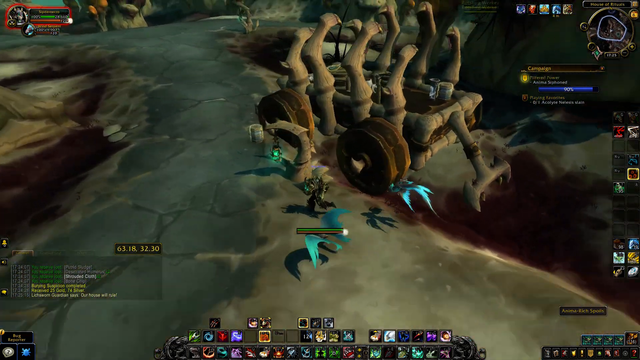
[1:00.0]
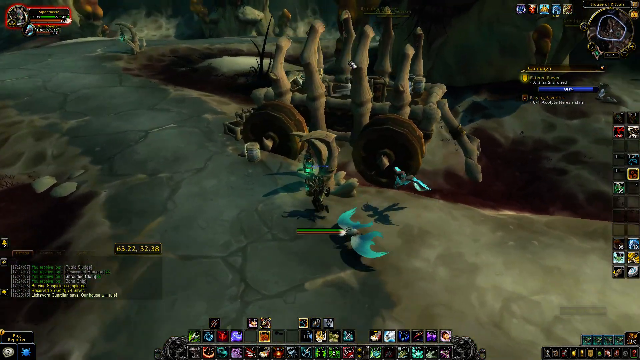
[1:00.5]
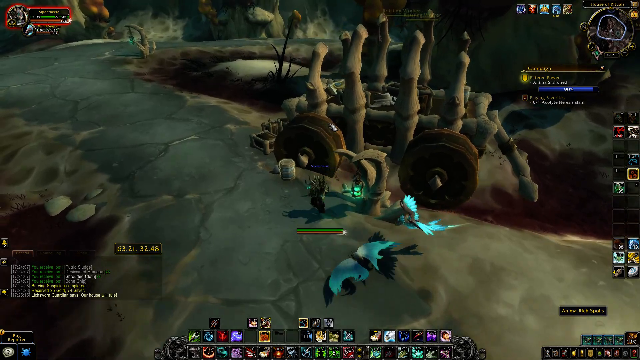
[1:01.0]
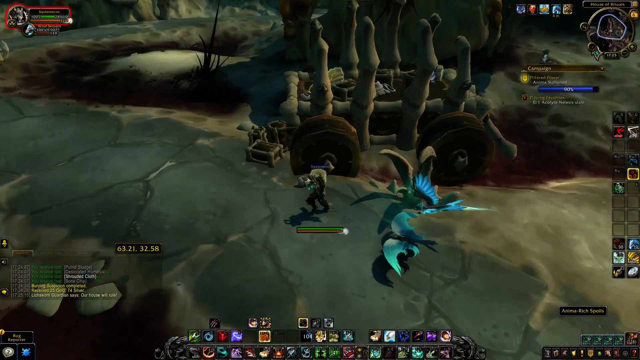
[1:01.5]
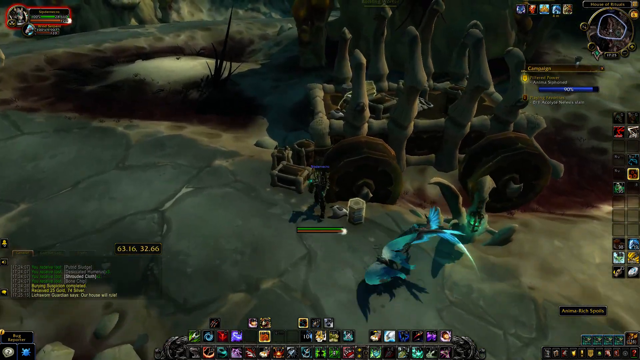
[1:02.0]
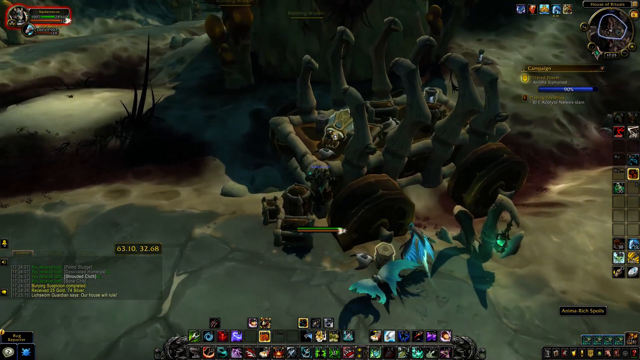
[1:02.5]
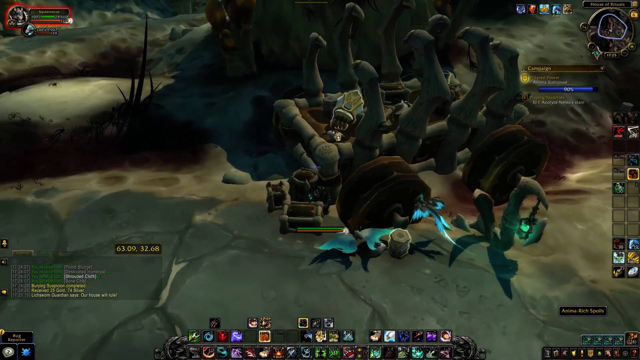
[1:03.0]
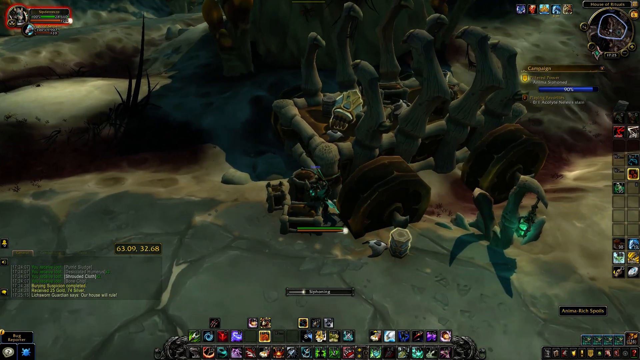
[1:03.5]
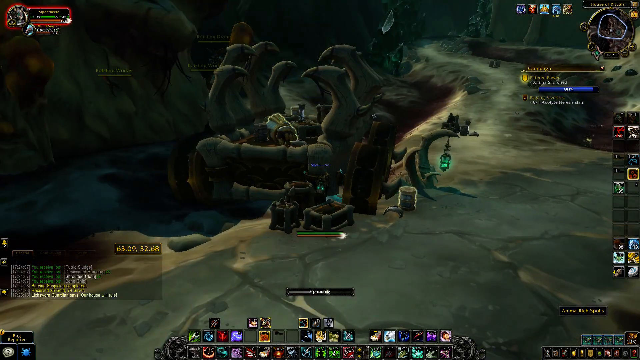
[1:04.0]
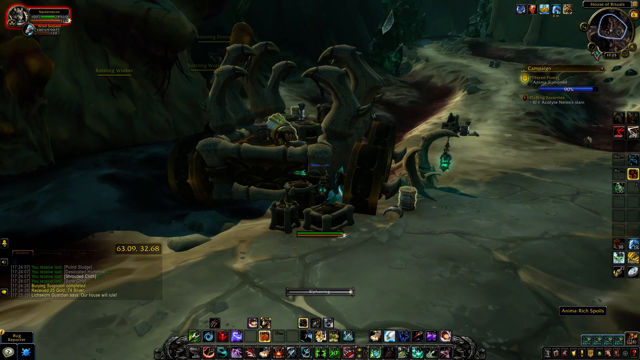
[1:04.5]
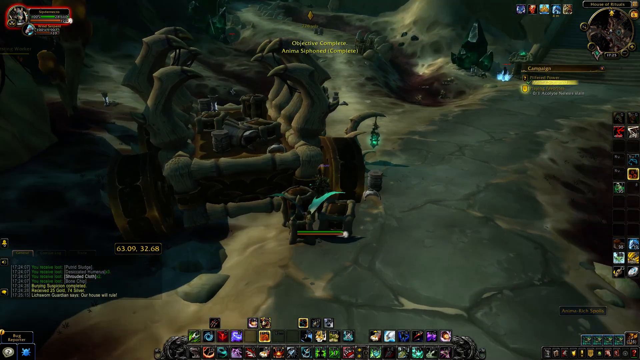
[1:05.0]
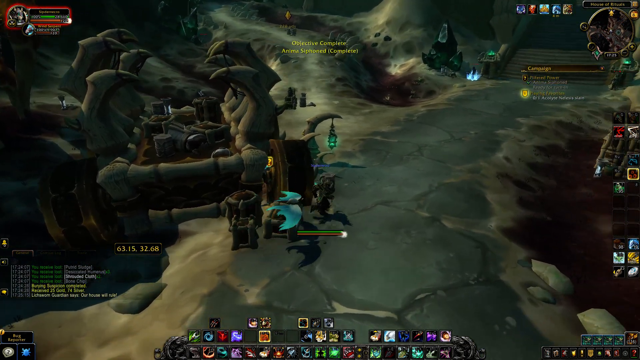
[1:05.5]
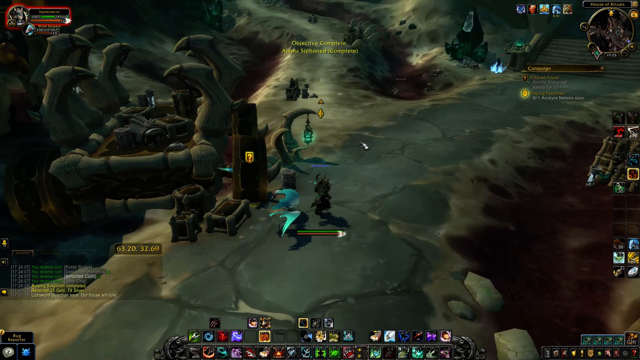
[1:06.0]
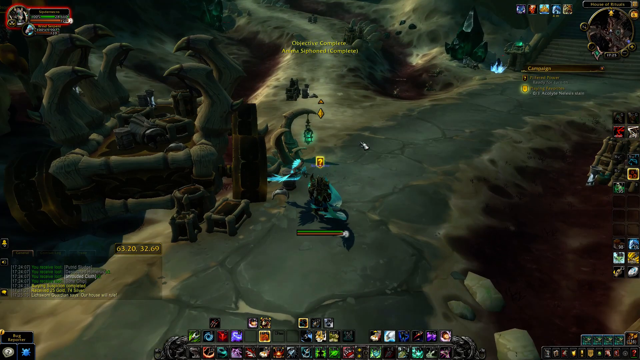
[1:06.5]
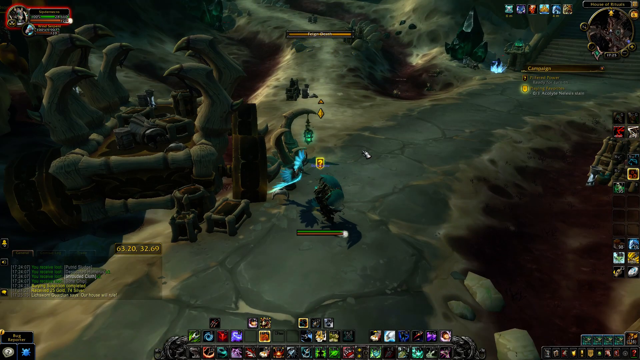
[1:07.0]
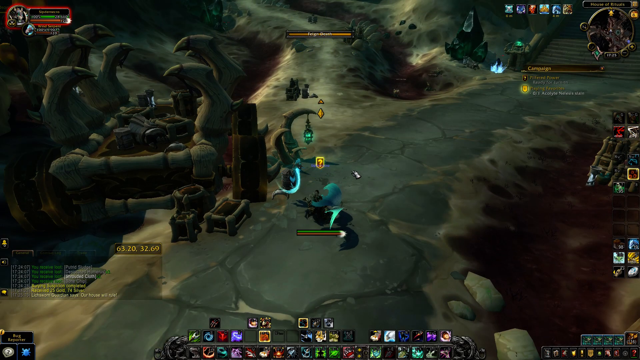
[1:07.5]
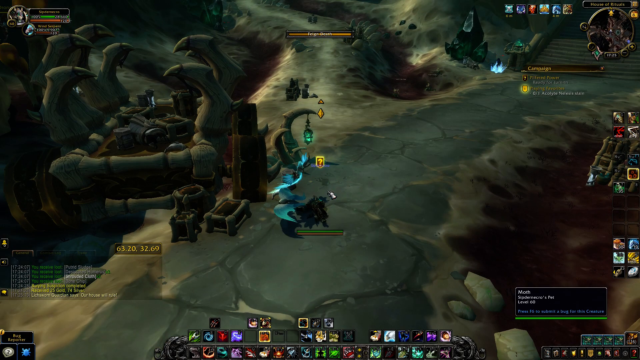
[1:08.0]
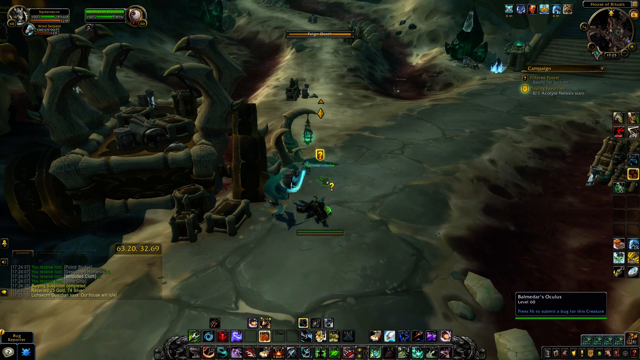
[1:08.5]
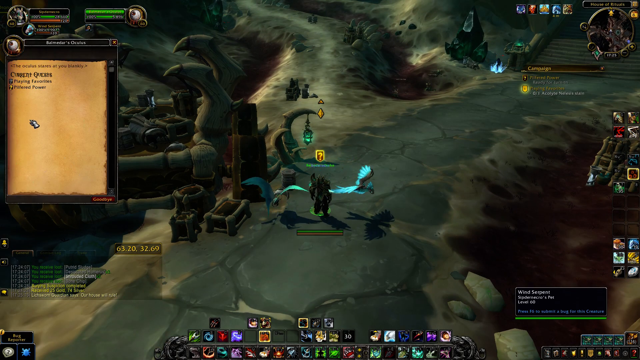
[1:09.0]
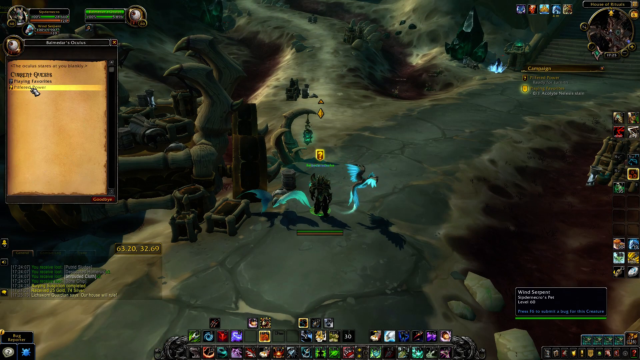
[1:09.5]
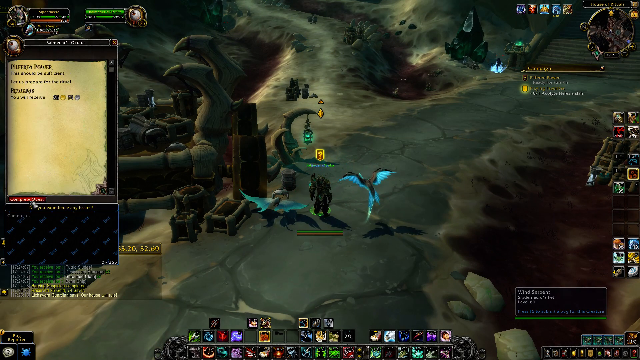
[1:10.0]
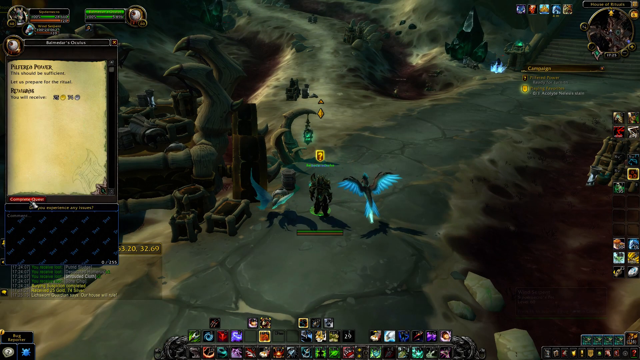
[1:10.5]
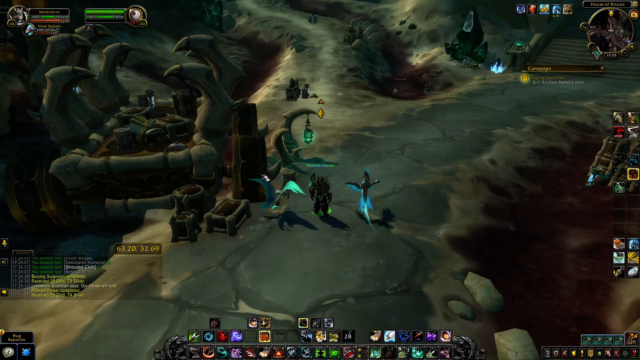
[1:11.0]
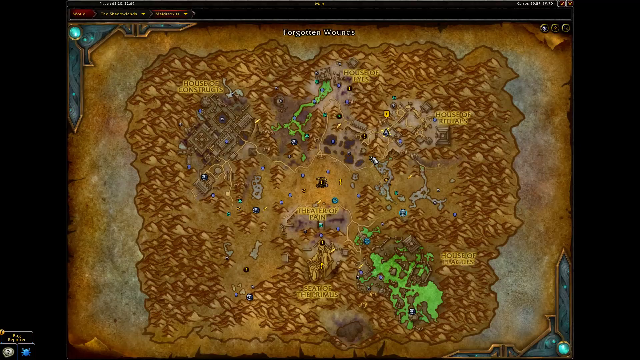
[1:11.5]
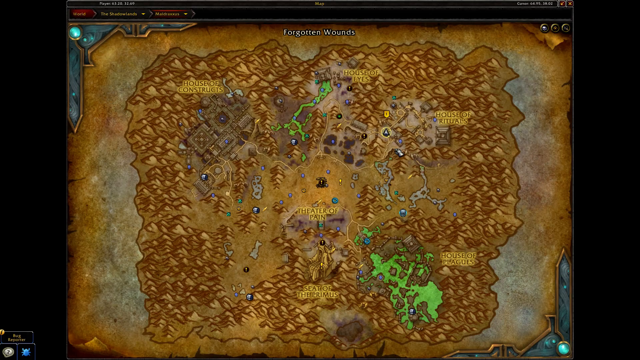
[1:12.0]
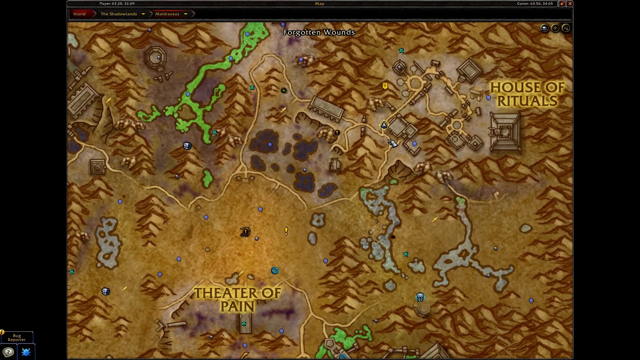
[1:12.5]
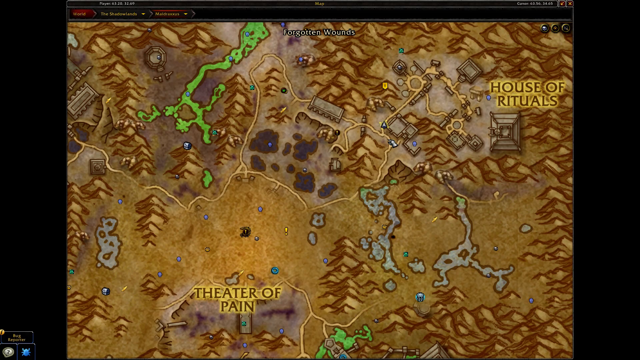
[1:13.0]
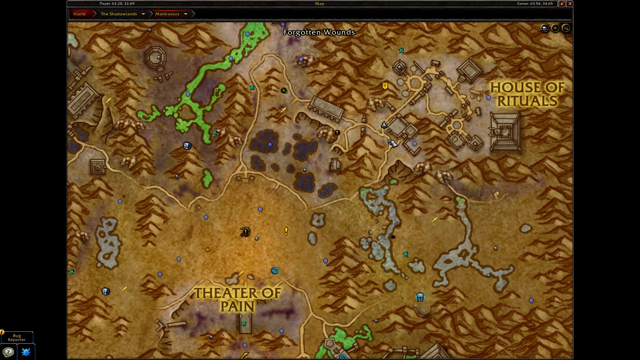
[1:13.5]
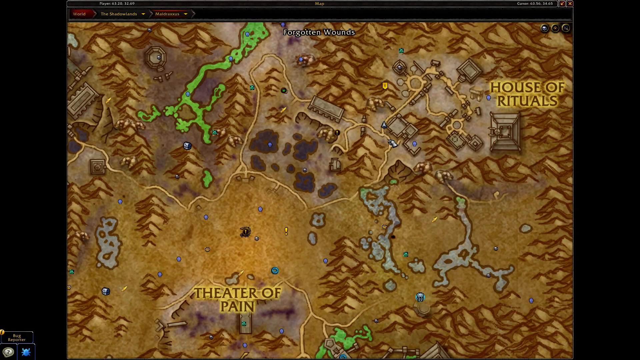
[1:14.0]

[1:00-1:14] The birds are still flying after the robot character. Under the robot character there is something like a power bar, which kind of moves when he runs. The robot character goes behind what looks like a giant jeep, apparently trying to hide to power up, while the birds keep following him. A question mark appears above one of the birds' heads and then above the robot character's head, and then another book with information appears to the left. Then a map appears, apparently the same map that was shown at the beginning of the video.